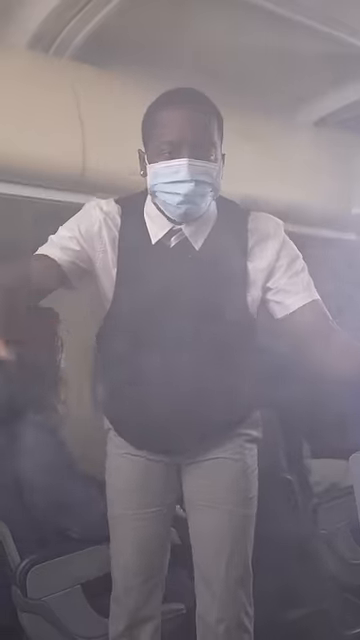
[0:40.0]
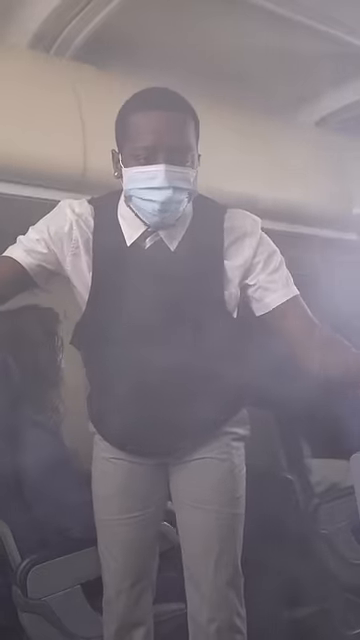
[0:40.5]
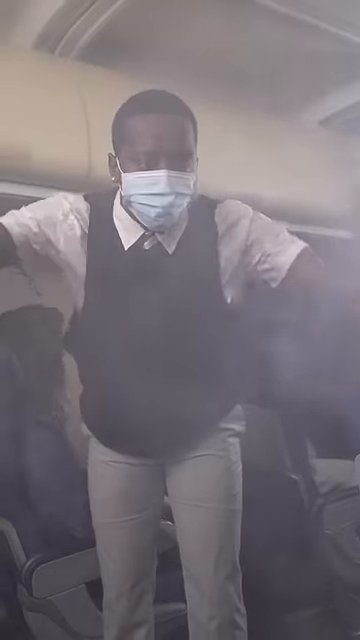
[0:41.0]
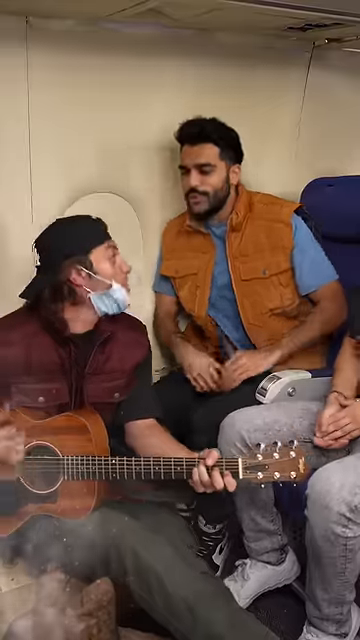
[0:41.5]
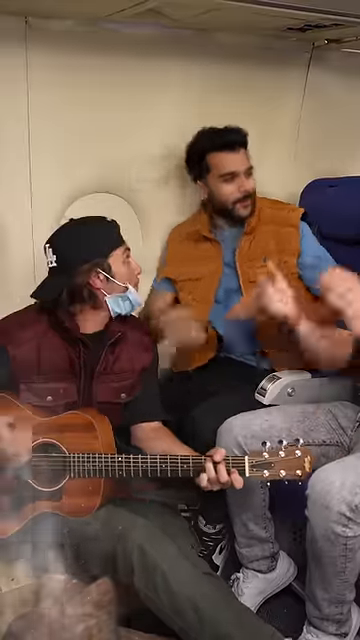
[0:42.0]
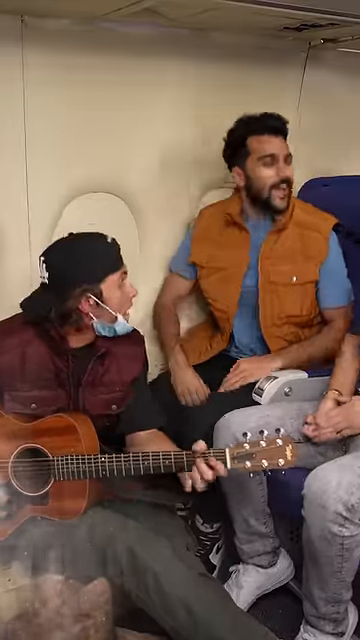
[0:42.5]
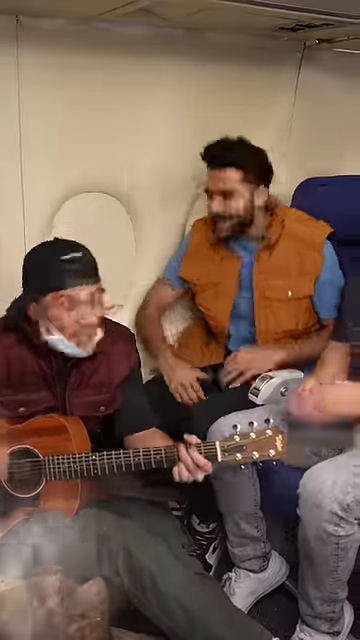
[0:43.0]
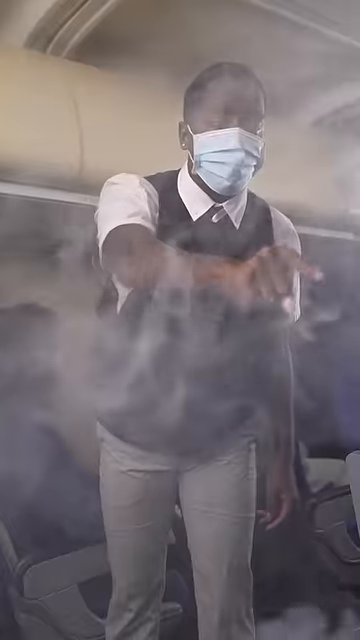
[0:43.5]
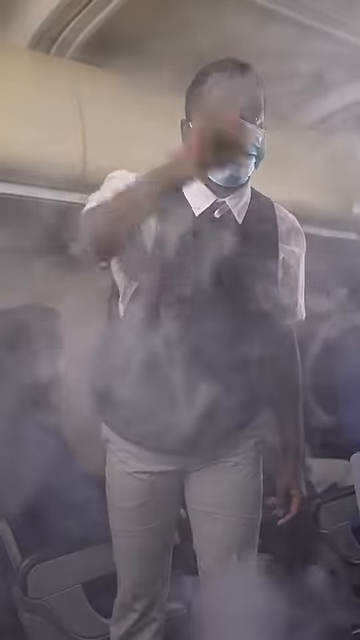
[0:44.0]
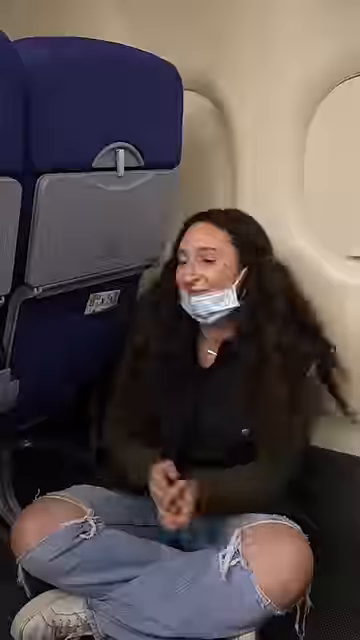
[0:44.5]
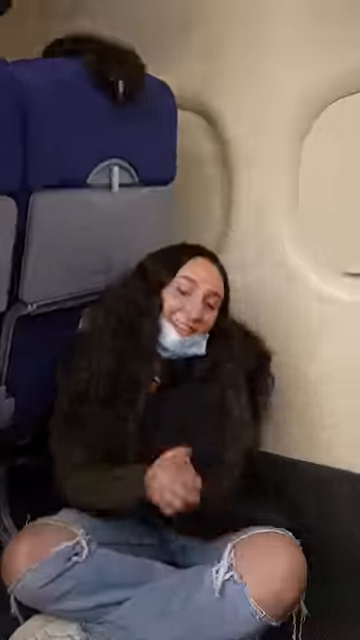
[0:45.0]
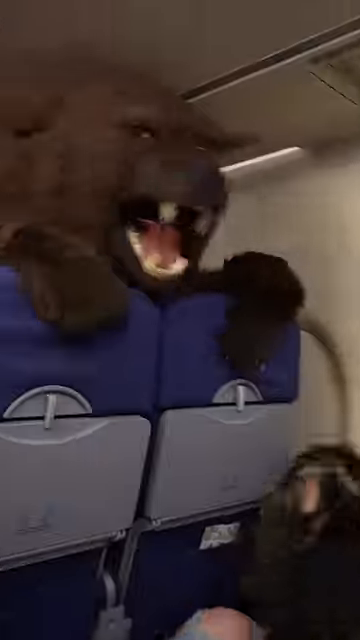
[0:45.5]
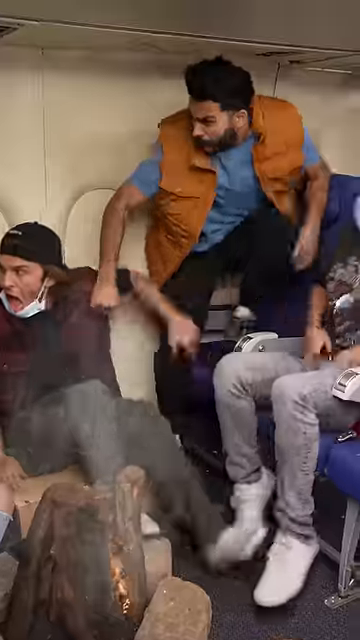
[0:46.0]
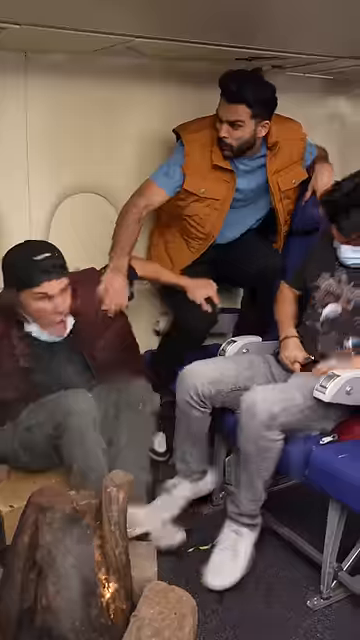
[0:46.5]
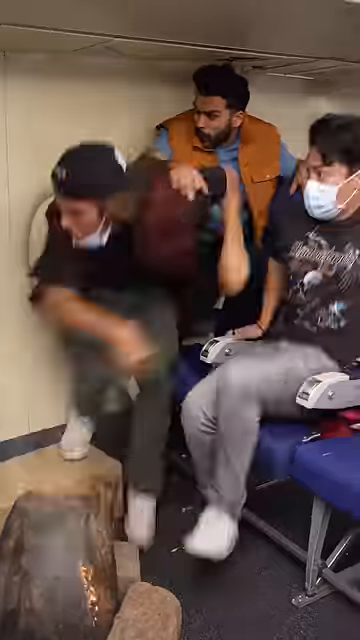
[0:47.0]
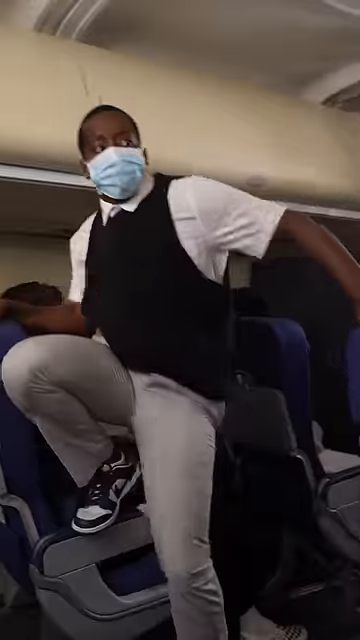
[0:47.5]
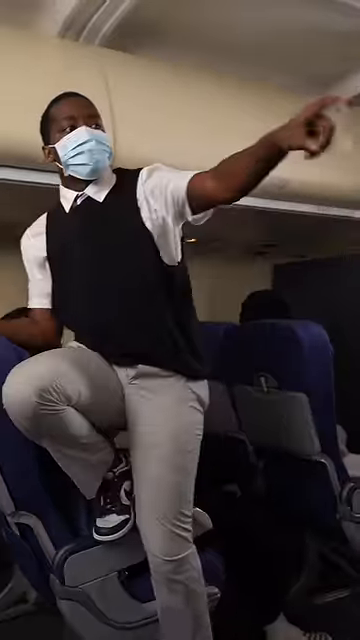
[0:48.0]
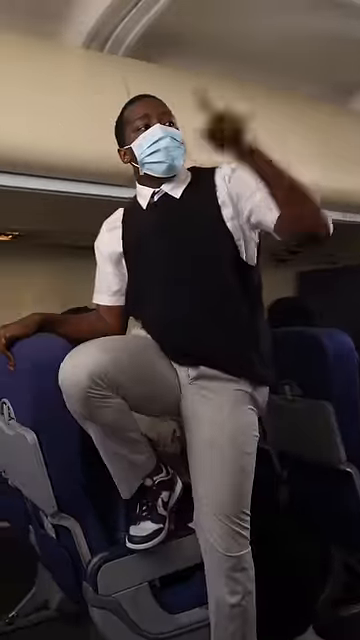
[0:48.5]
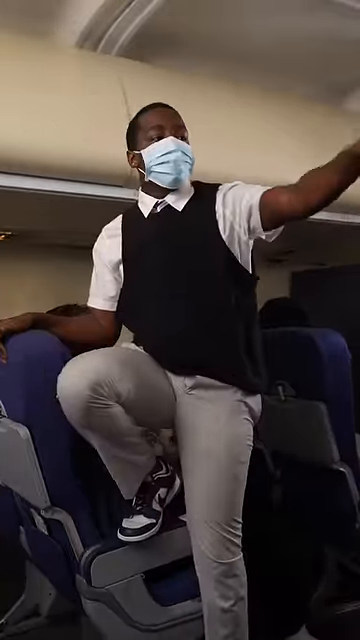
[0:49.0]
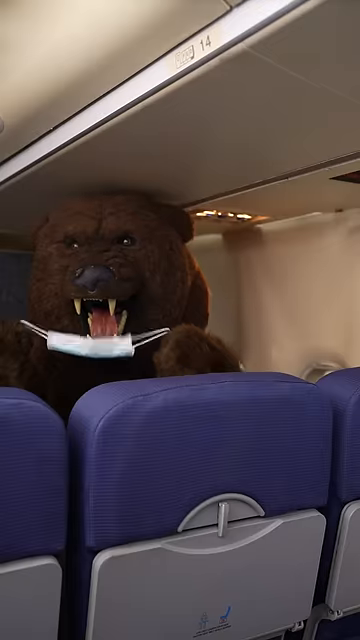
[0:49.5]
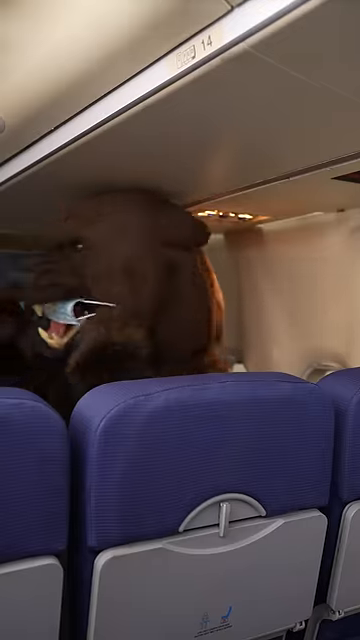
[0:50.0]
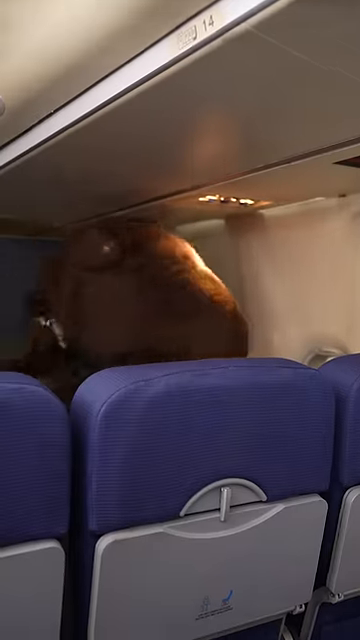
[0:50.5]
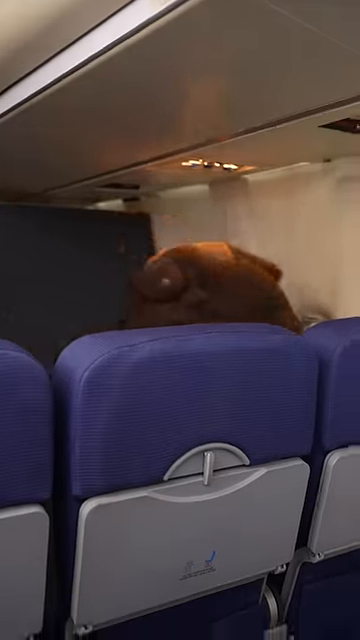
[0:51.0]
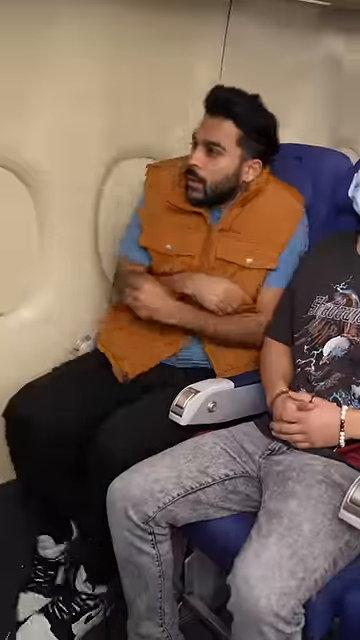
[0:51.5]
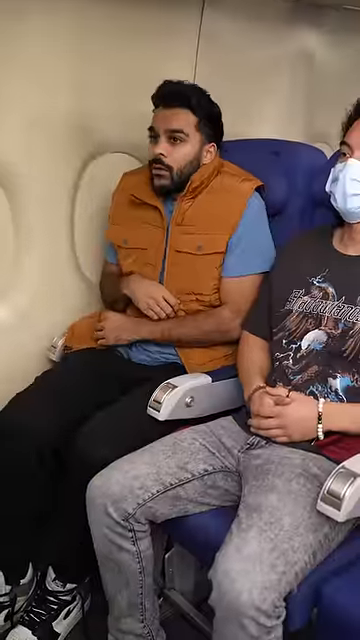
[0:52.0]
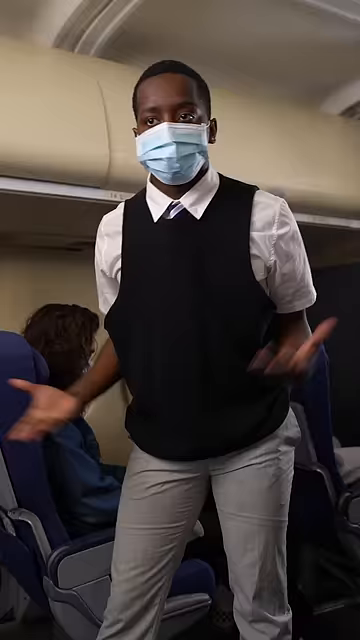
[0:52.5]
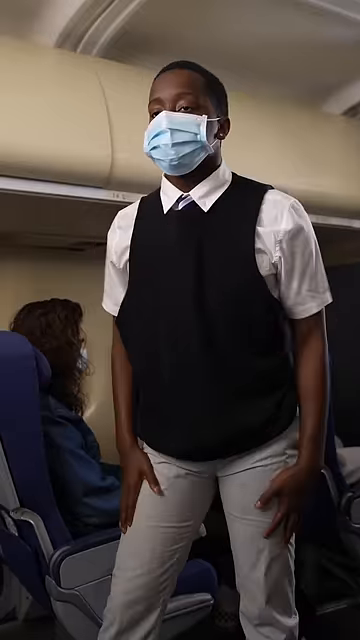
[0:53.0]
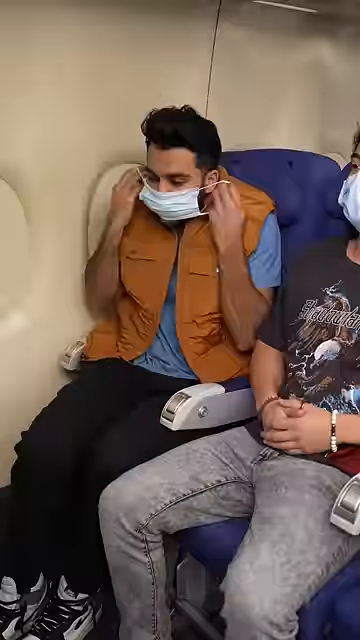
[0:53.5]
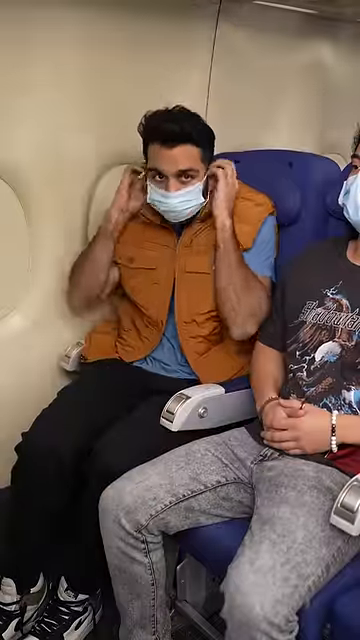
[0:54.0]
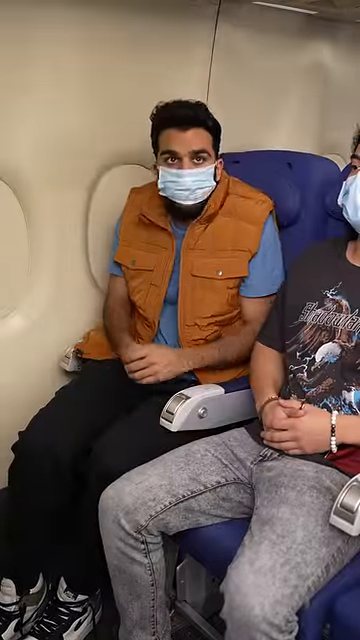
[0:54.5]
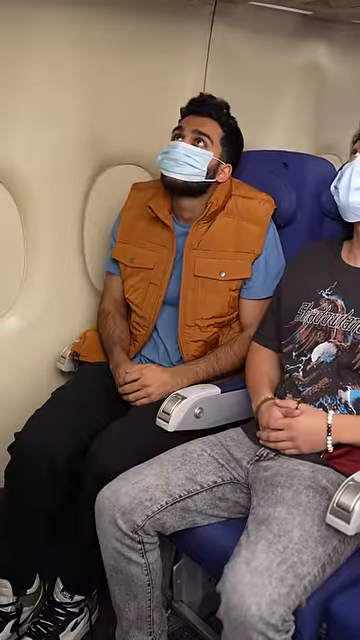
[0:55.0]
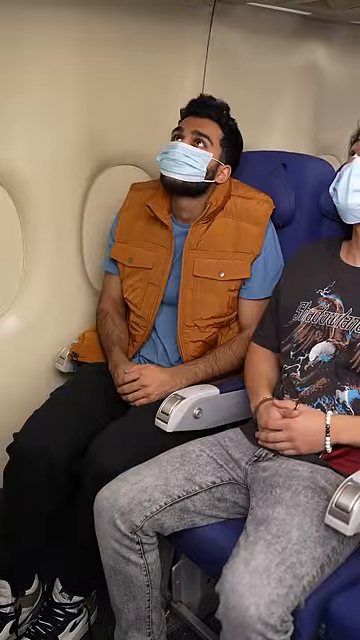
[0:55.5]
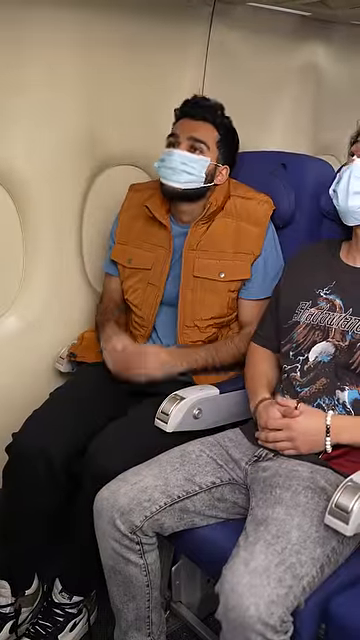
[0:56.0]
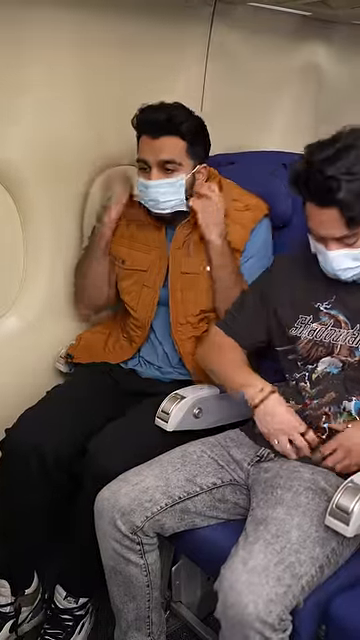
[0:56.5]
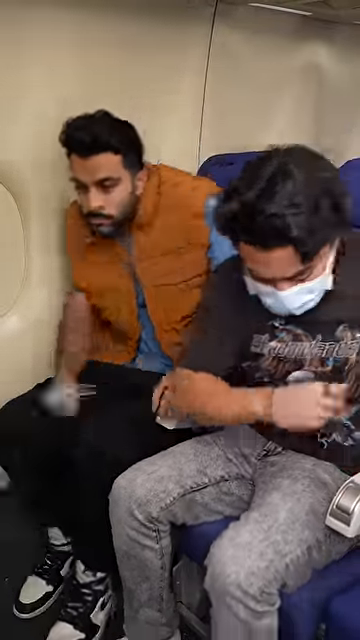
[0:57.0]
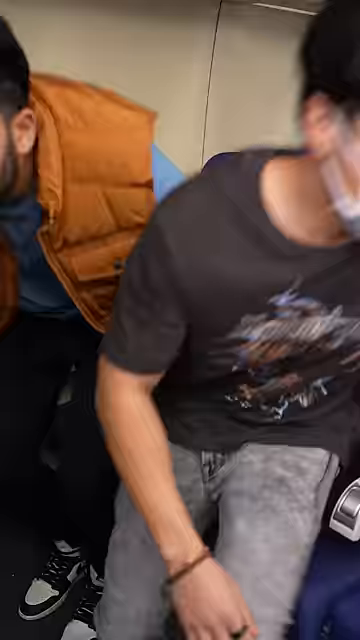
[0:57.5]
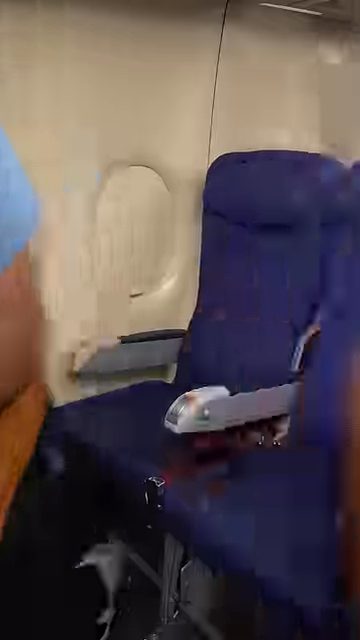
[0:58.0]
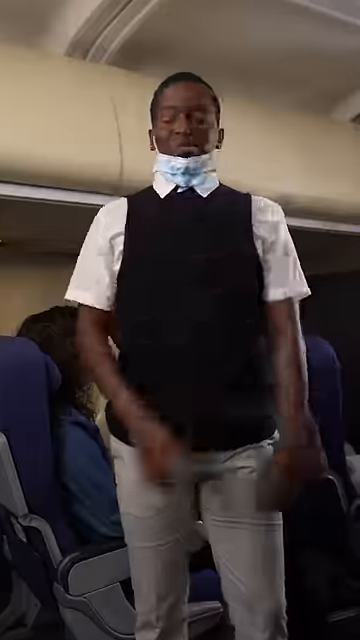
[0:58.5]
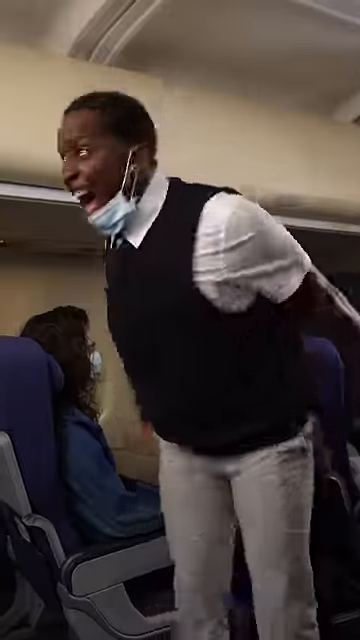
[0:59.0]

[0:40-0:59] The flight attendant returns. Smoke is all over the place from the campfire the passengers have made on the airplane, and they are sitting around it with instruments, apparently singing campfire songs. Suddenly a person in a brown bear costume jumps up in the seats ahead, looks back and frightens everyone. Everyone jumps all over the place: the flight attendant, the people around the campfire, and even a passenger who was not part of it and was sitting on the floor clapping. Then everything becomes calm, and everyone sits in their seats and puts their masks back on. The quiet passenger and the original passenger who caused the chaos unfasten their seatbelts, get up and walk as if they are leaving the section, and the flight attendant throws his hands back in frustration.